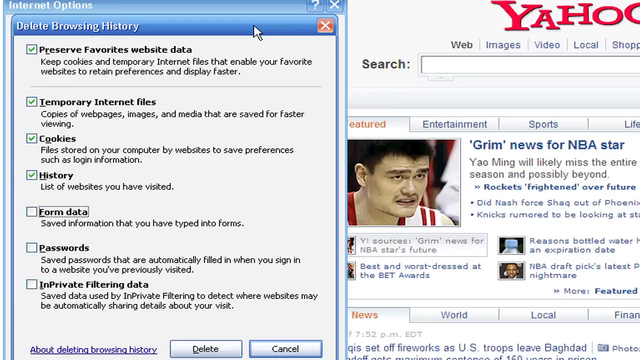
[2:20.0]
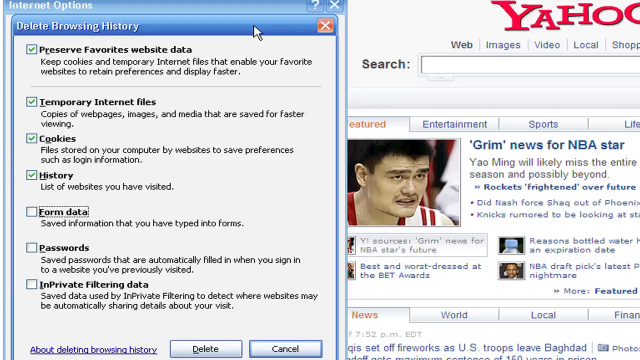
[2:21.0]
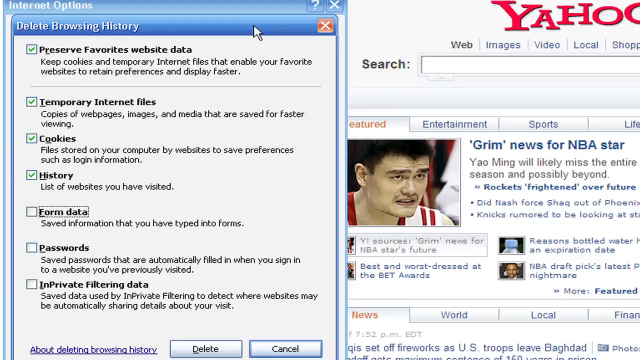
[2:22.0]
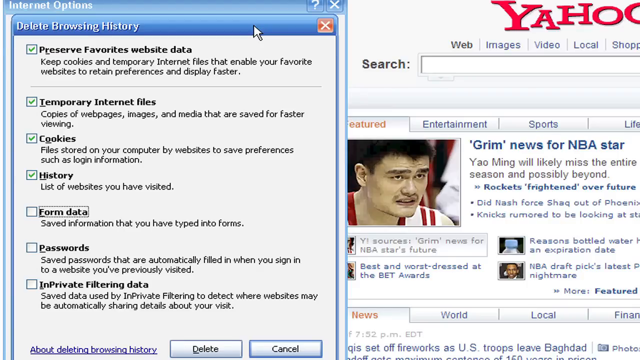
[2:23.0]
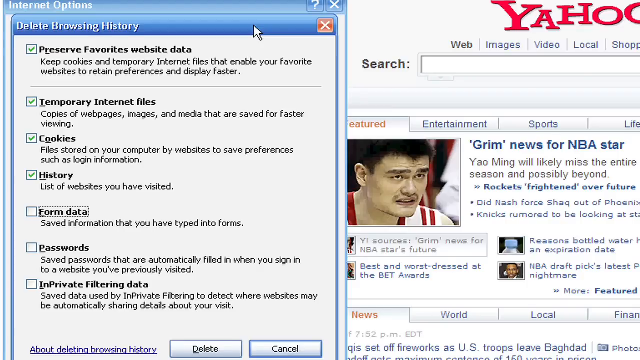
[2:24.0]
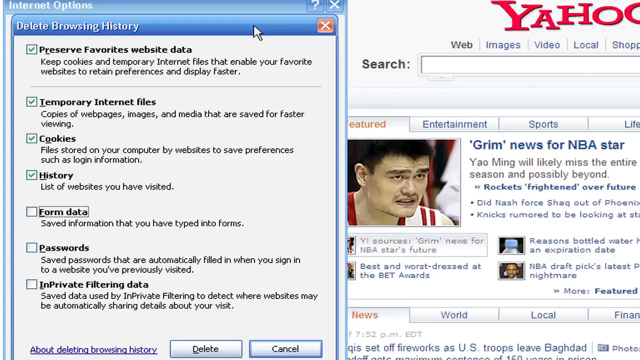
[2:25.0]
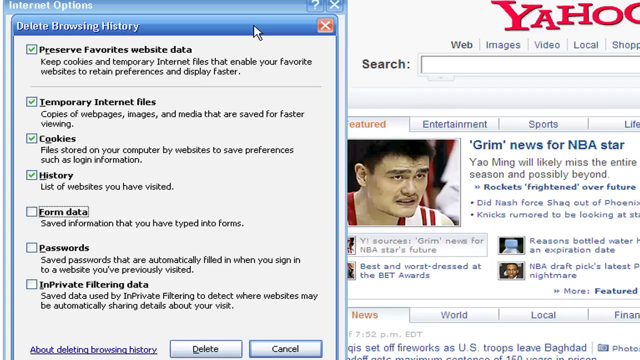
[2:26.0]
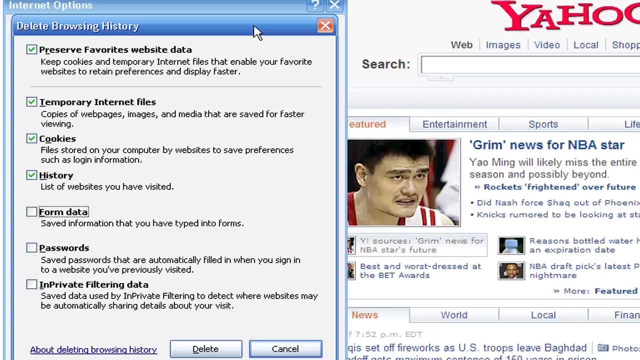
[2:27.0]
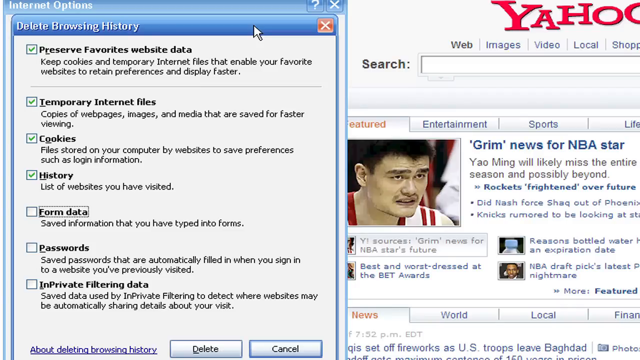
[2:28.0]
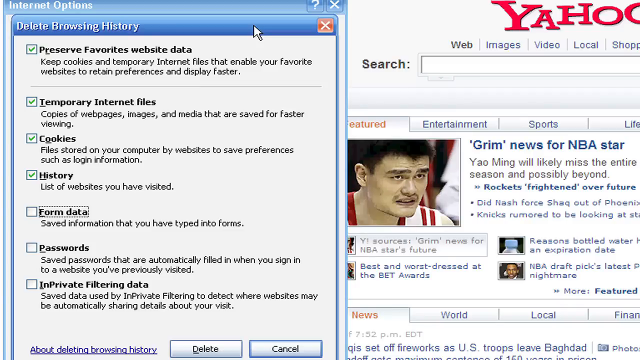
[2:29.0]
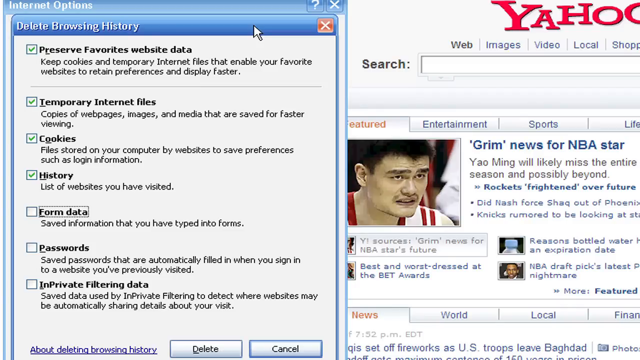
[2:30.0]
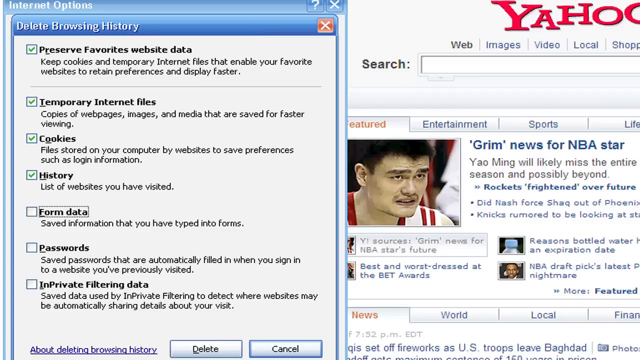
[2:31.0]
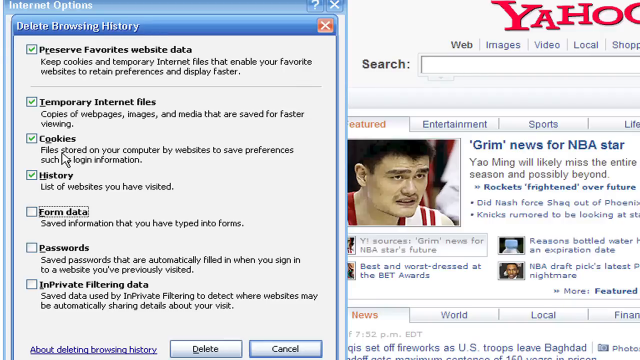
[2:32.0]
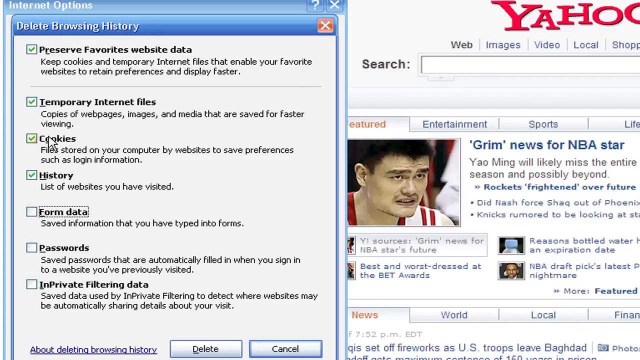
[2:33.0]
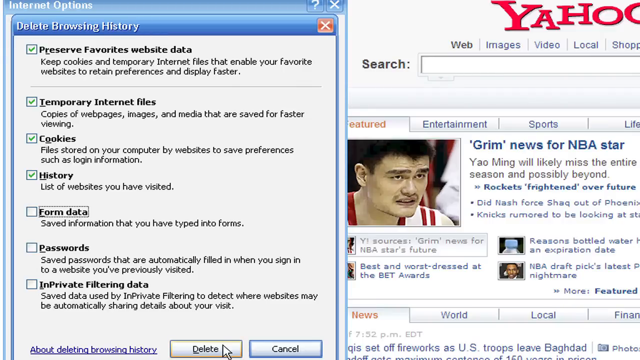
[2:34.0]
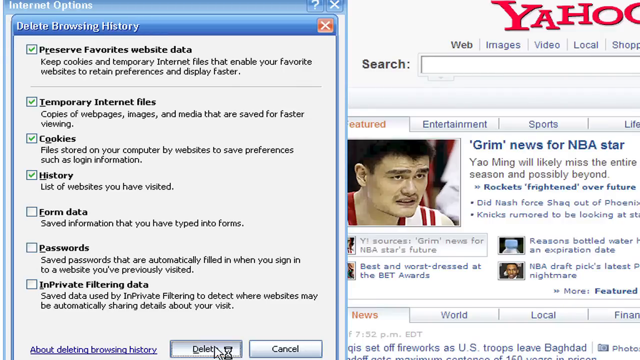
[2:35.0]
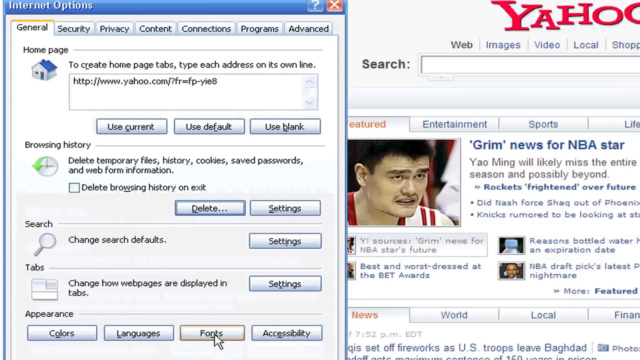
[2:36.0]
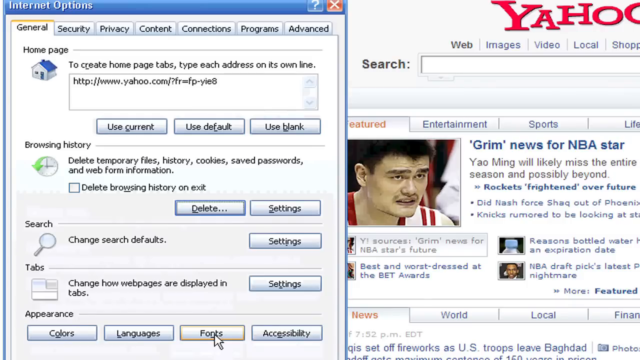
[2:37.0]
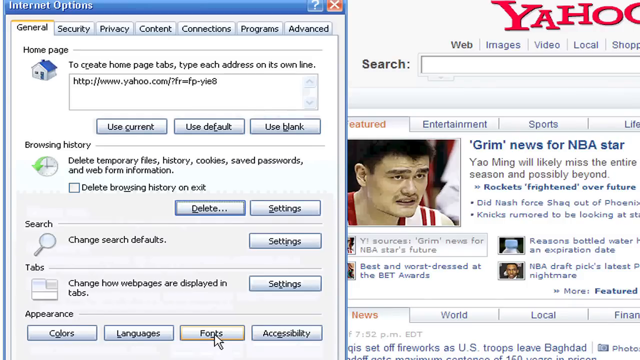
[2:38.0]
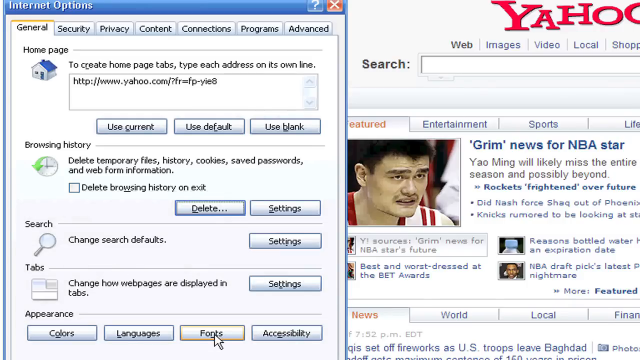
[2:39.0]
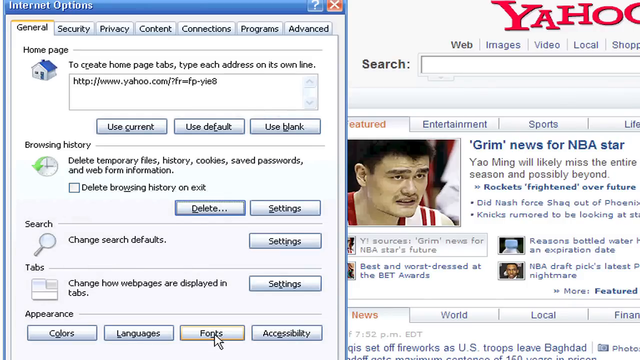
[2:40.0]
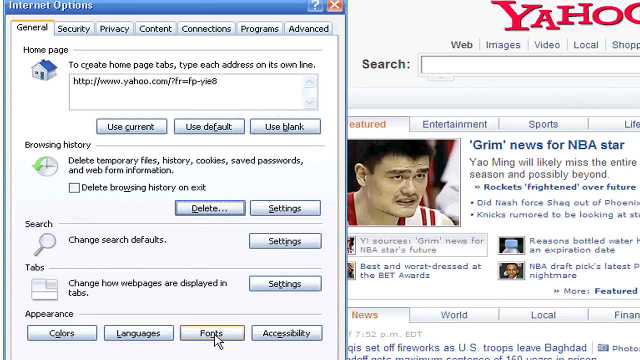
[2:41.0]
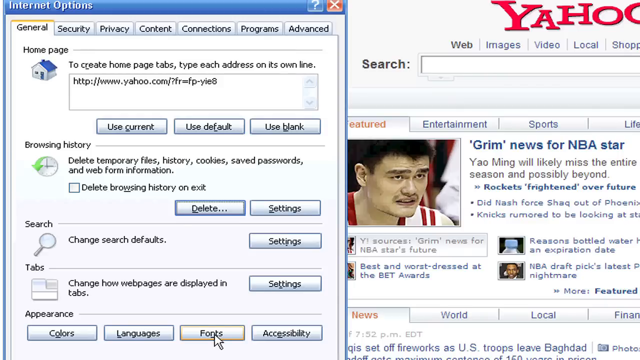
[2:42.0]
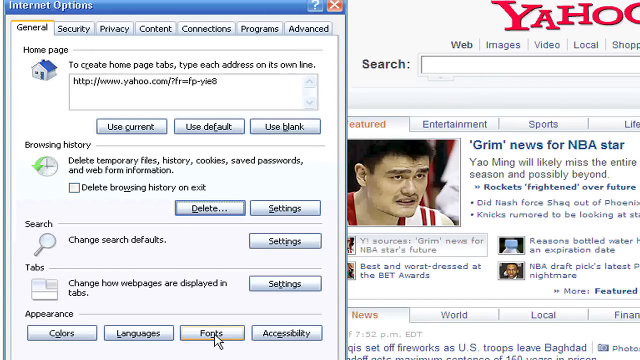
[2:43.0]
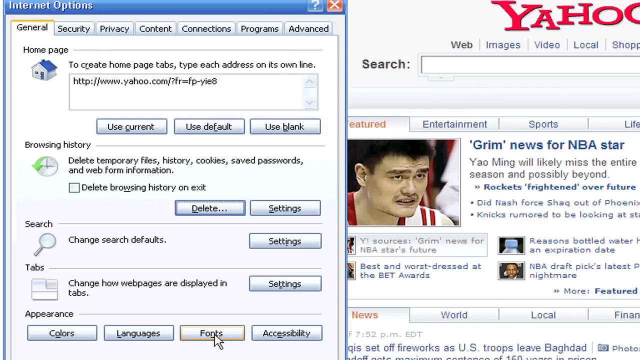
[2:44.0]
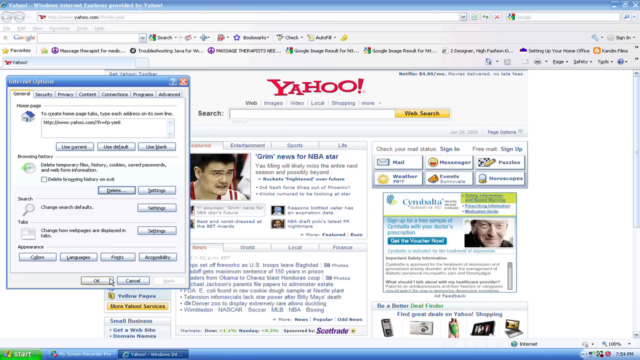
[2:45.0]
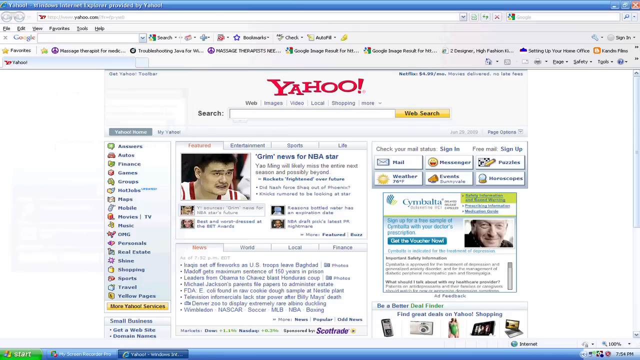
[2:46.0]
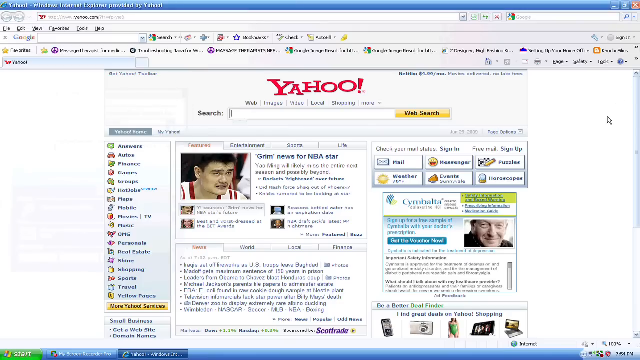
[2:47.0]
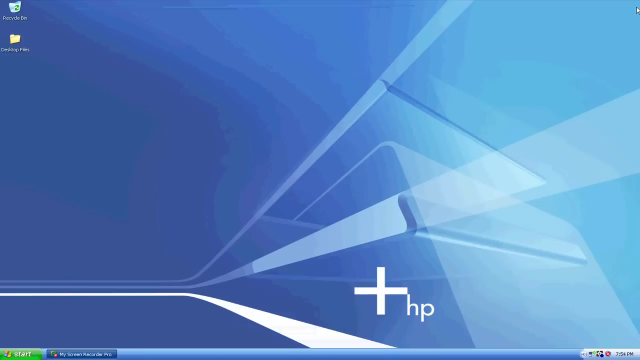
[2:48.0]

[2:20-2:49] The person looks at the open Delete Browsing History window without moving the mouse, which rests at the top of the window. Then the mouse moves again and the person selects Delete at the bottom, and it reopens. In the background the Internet Options window is still open on the General tab. The view zooms out, showing a wider angle of the screen. The Yahoo webpage remains open in Internet Explorer with many bookmarks, and the middle of the page has many different types of news, including one about an NBA star beginning "Grim news". The video seems to have been made quite a few years ago.